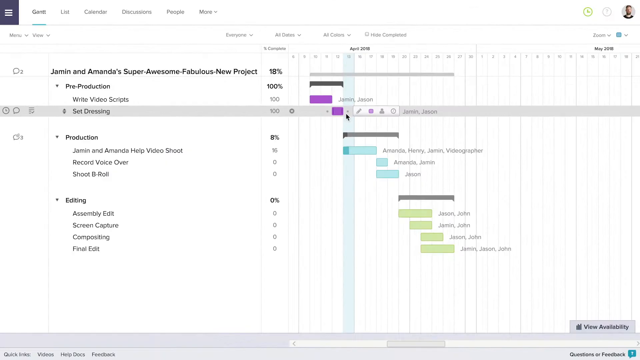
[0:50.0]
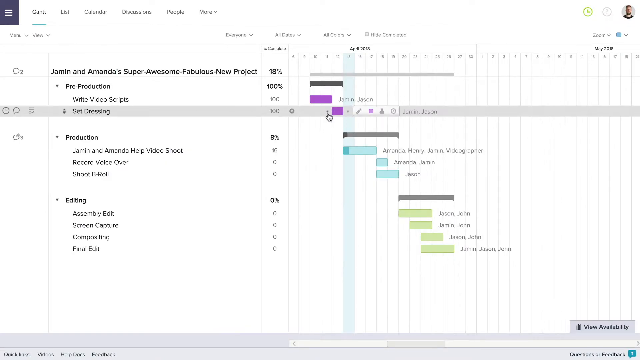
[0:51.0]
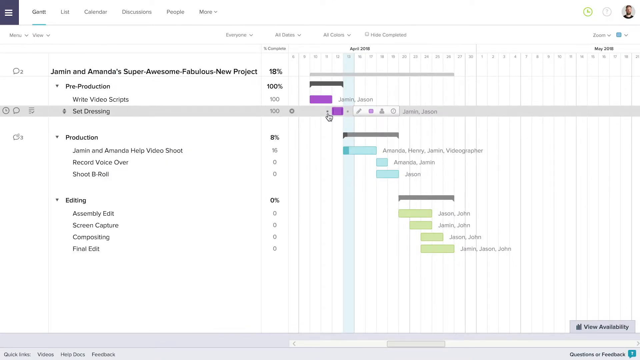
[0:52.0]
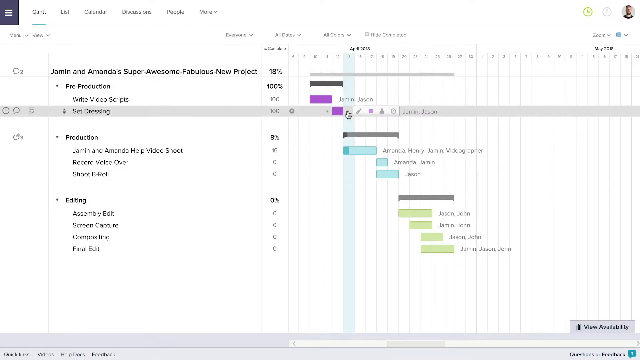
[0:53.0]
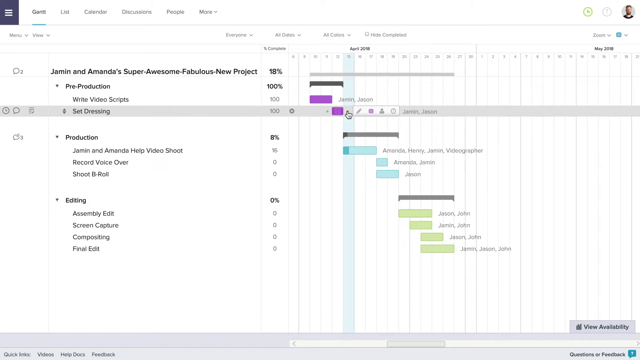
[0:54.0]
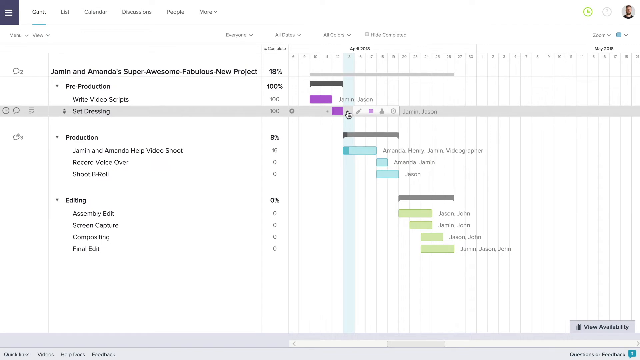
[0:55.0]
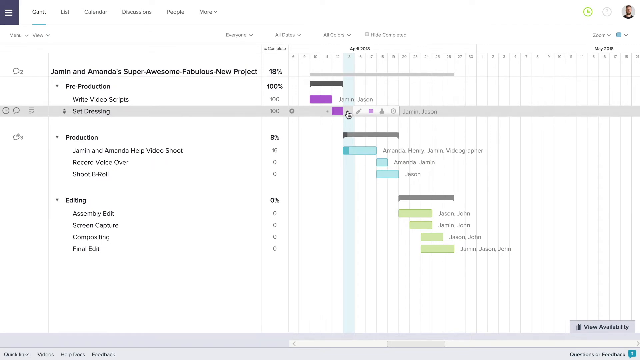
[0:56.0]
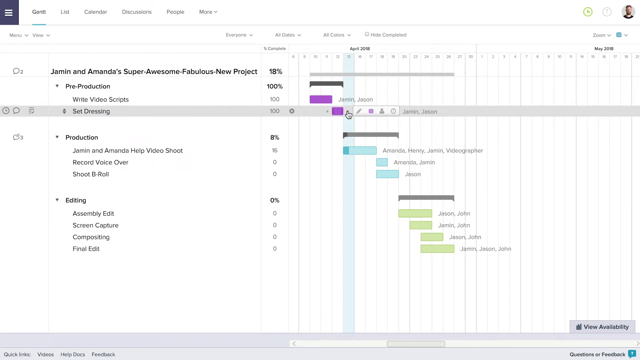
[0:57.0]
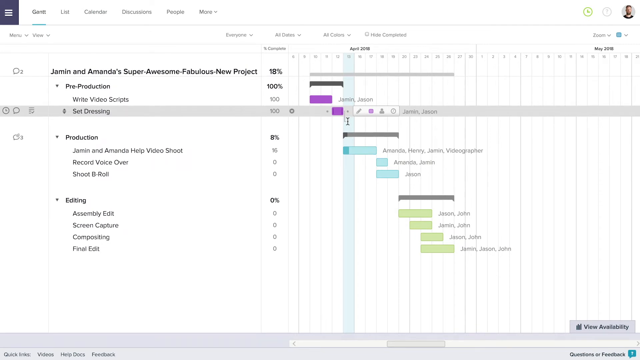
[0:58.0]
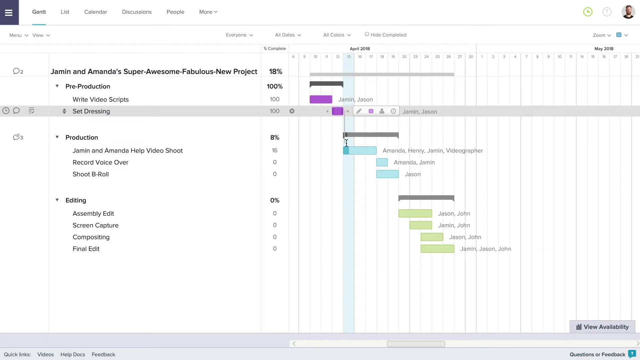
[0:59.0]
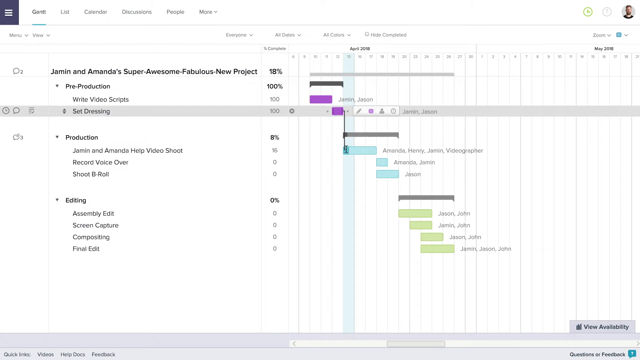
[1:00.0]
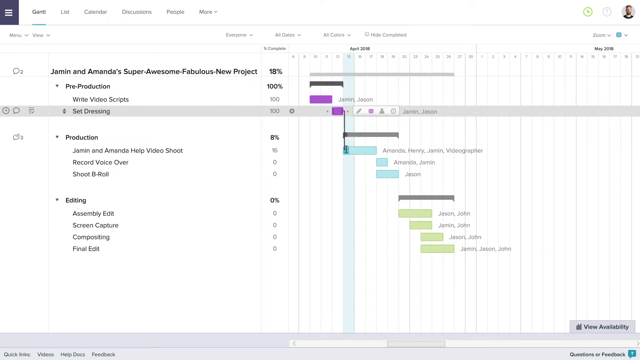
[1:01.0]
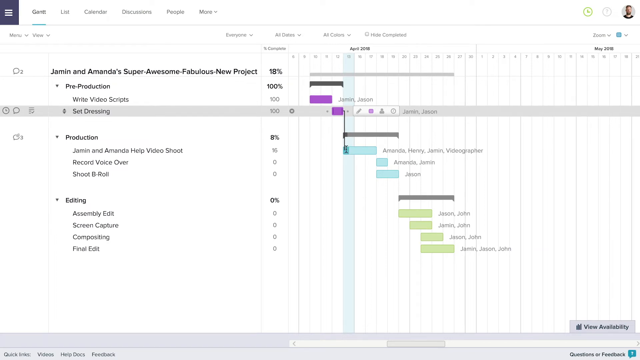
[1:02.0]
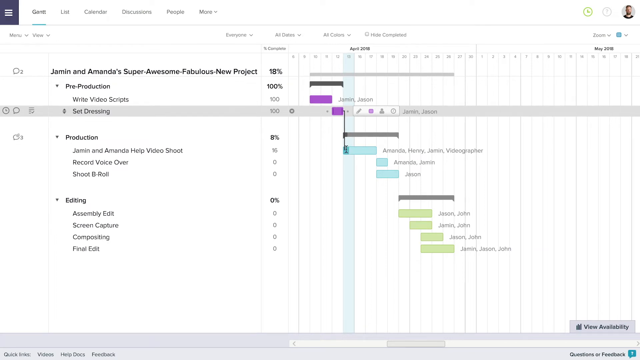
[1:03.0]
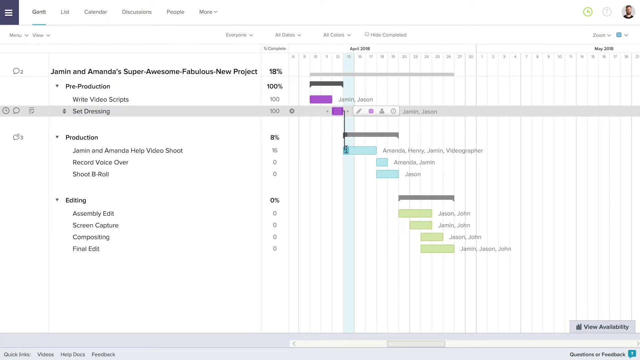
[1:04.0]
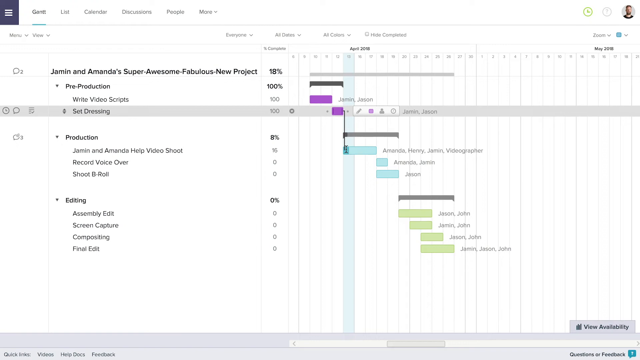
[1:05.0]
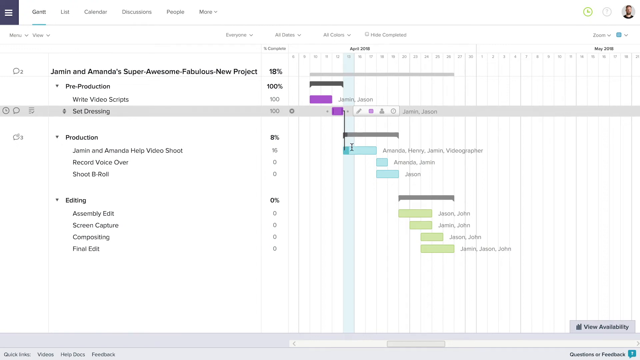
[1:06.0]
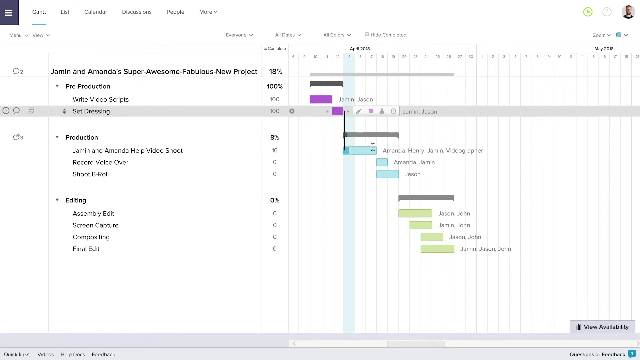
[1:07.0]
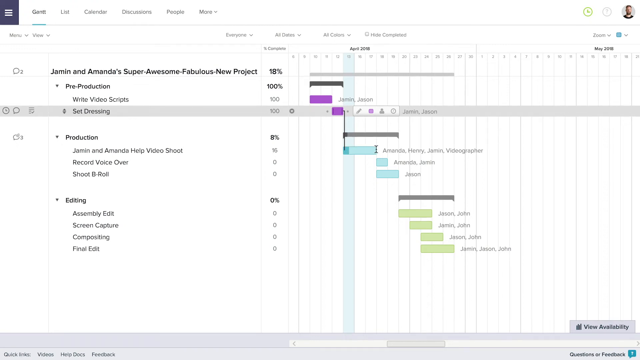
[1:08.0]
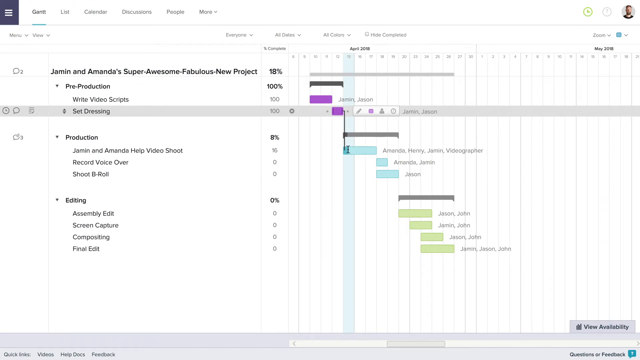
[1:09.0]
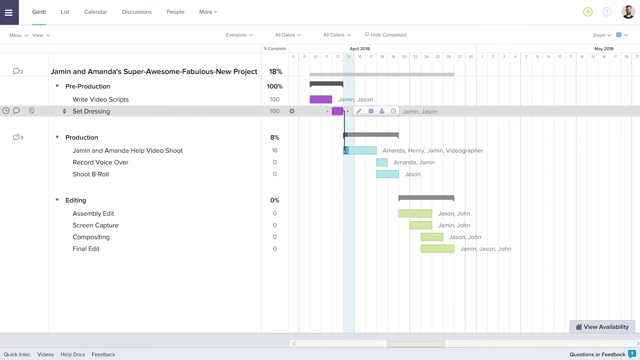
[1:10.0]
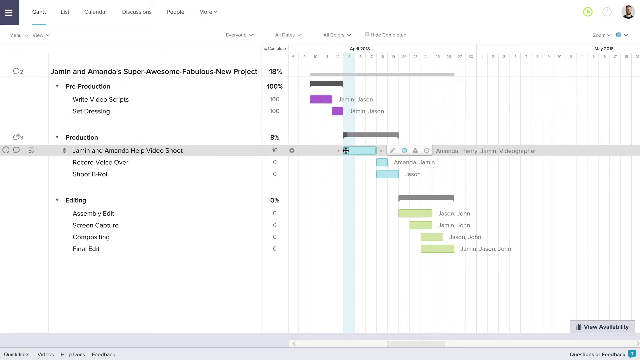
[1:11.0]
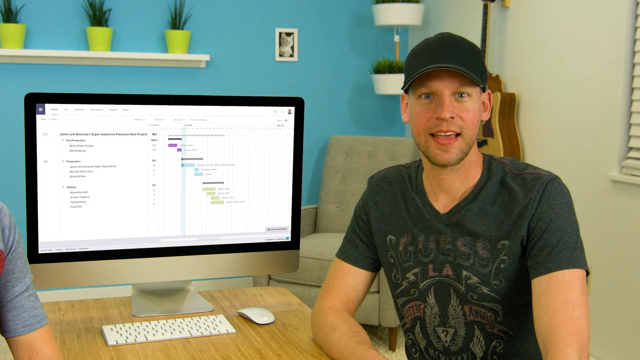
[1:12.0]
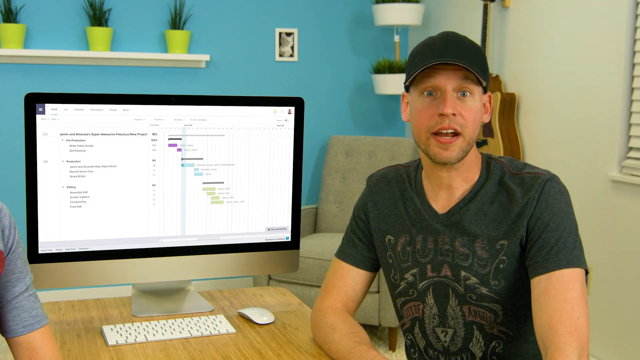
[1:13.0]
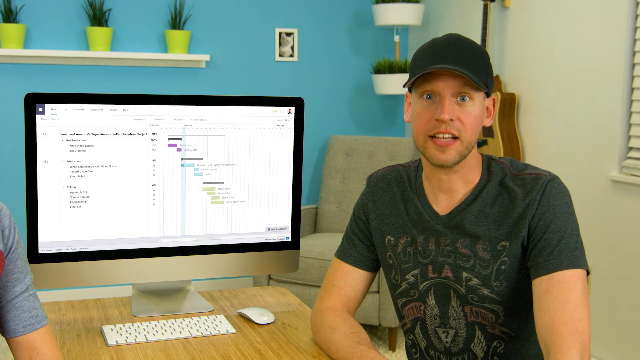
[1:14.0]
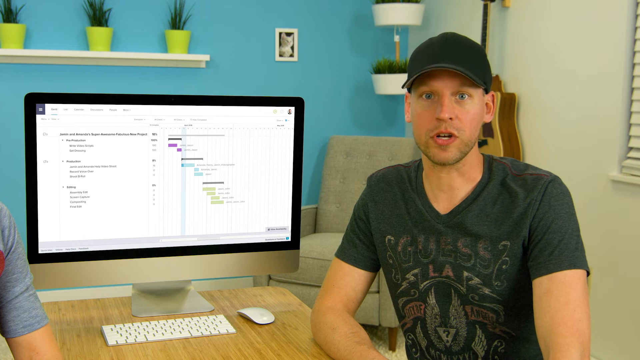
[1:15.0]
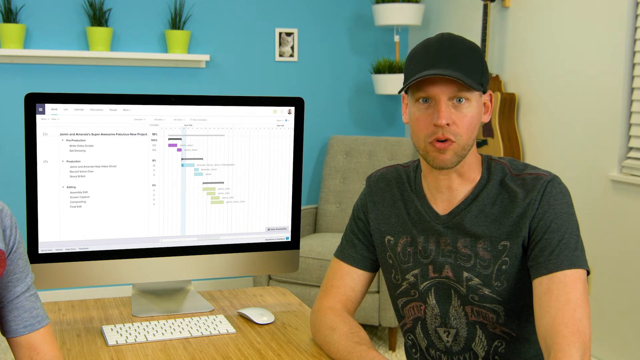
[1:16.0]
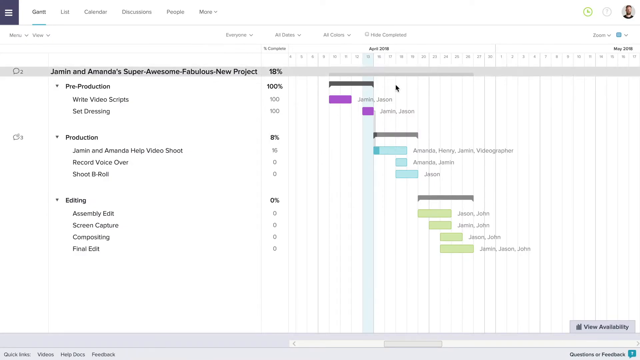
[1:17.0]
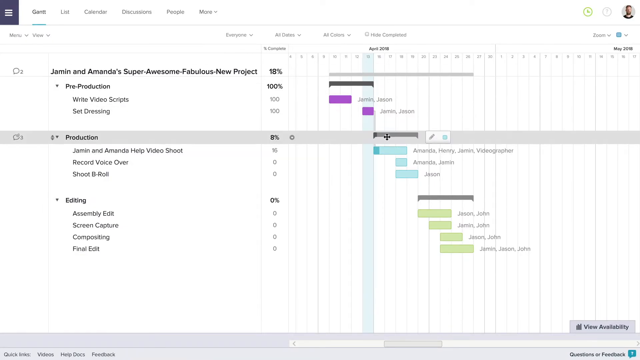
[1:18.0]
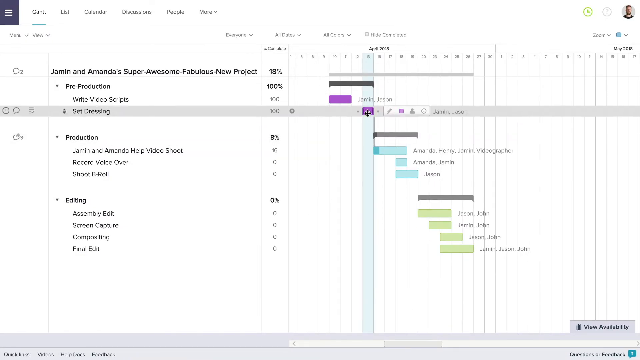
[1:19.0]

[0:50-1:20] A screen shows text reading "list, calendar, discussions, people, more," along with a menu and view tab and options reading "everyone, all dates, all colors, hide completed." Further text reads "Jammin' and Amanda's super awesome fabulous new project, 18%, pre-production 100%, write video scripts 100%, set dressing 100%, production Jammin' and Amanda, help video shoot 16%, record voiceover zero, shoot B roll zero, editing zero percent, assembly edit zero, screen capture zero, compositing zero, final edit zero." Small purple, blue and green rectangular boxes have light gray text of different names next to them. The mouse moves to a small black circle, then to another small black circle, then scrolls slightly down the page and stops on a blue rectangular box. It moves a bit toward the right, then toward the left, and one of the rows is clicked.